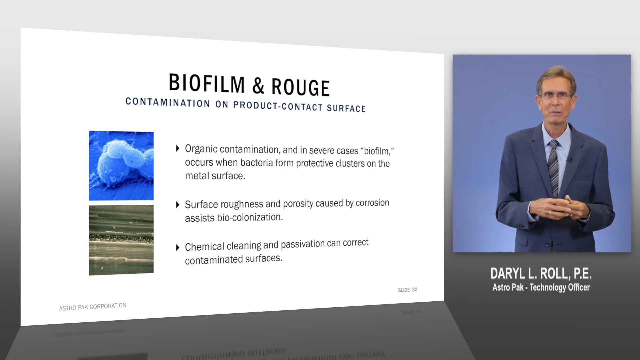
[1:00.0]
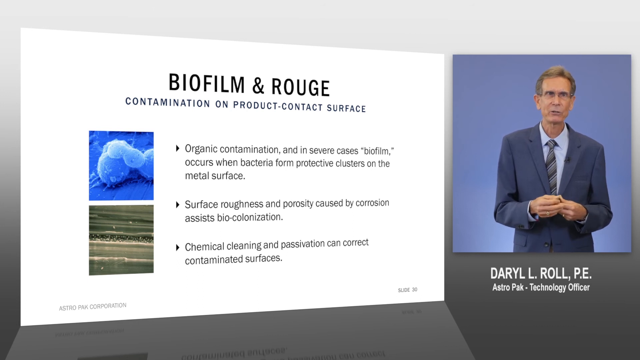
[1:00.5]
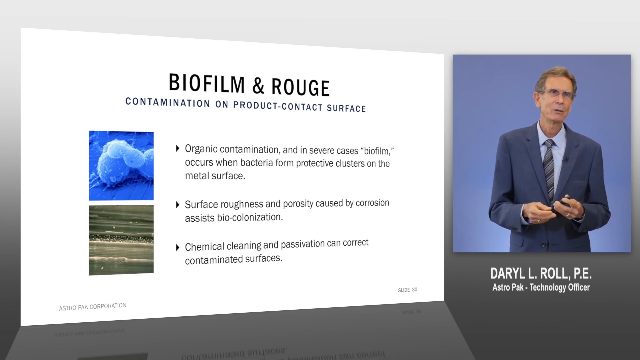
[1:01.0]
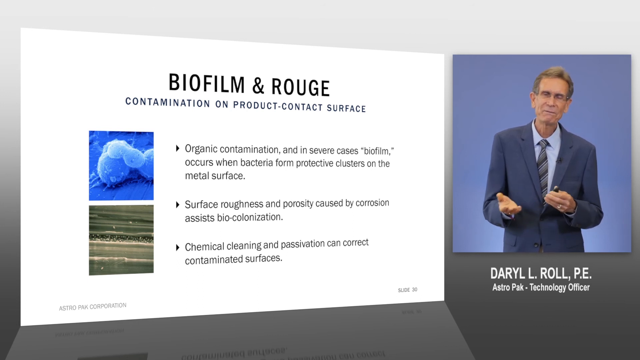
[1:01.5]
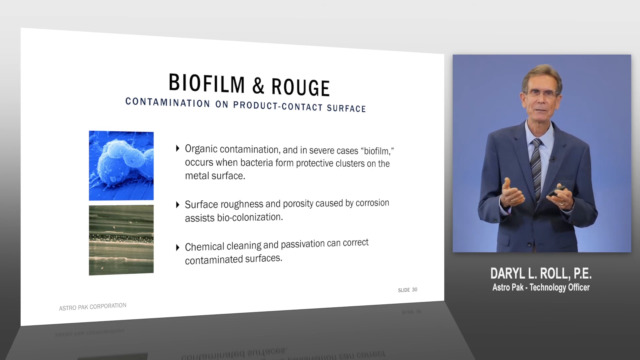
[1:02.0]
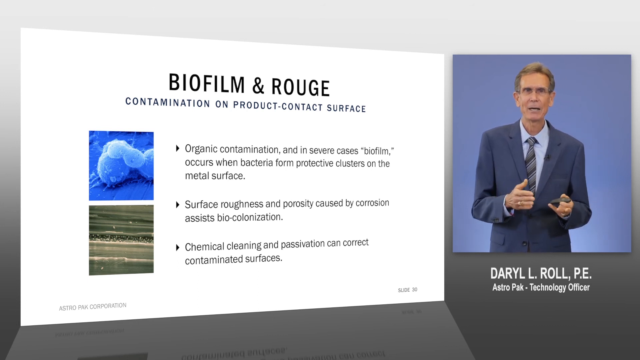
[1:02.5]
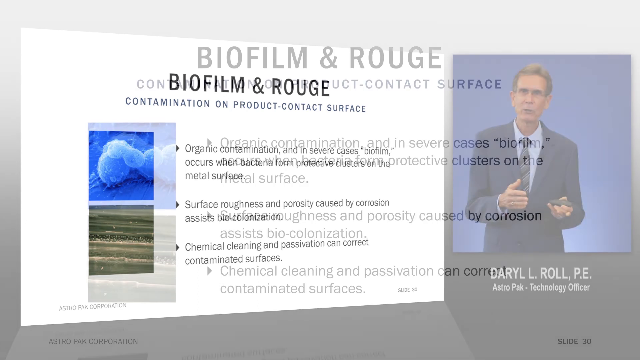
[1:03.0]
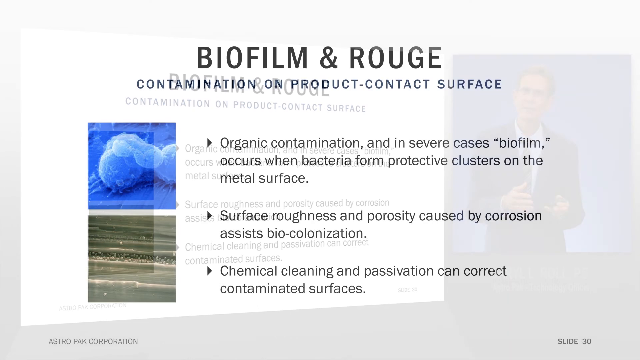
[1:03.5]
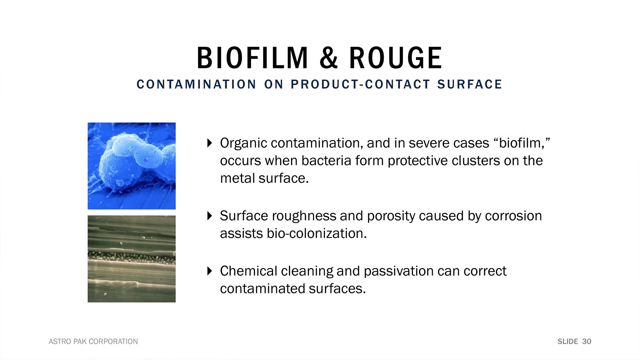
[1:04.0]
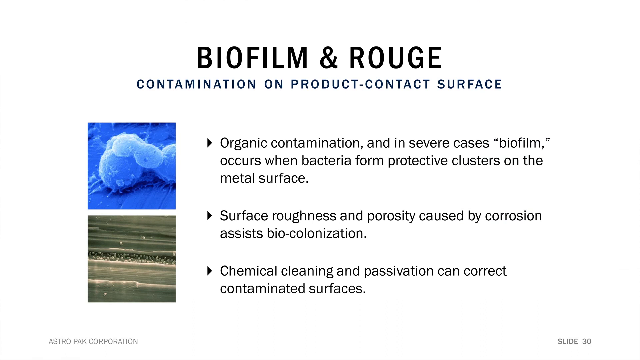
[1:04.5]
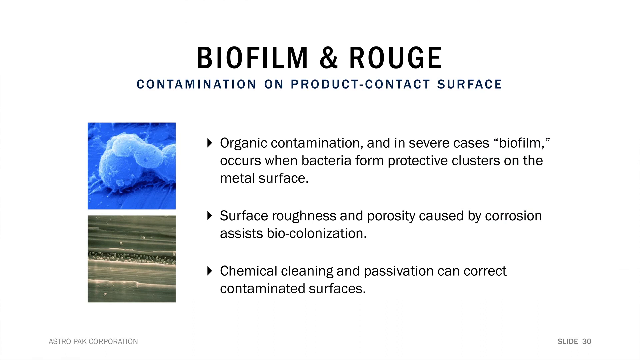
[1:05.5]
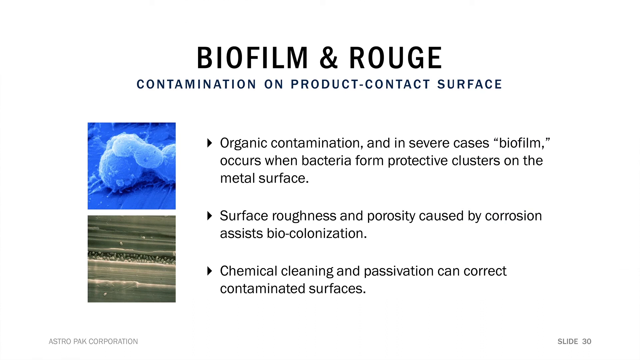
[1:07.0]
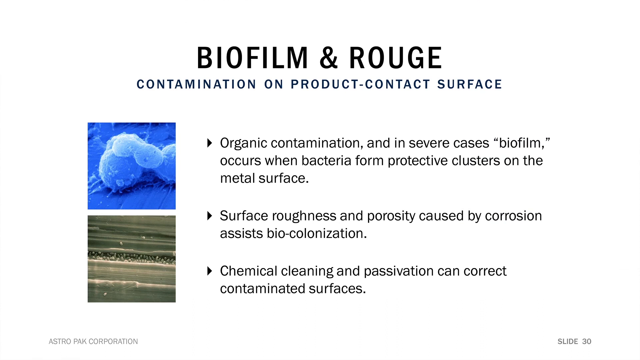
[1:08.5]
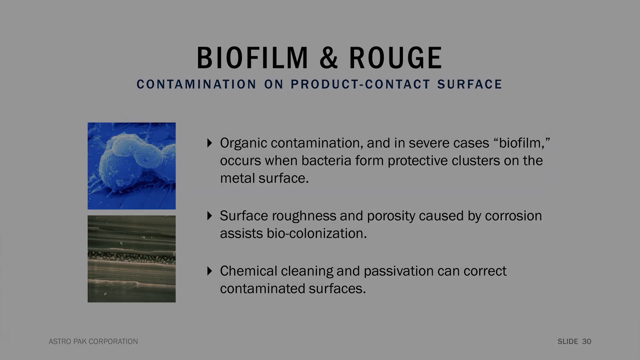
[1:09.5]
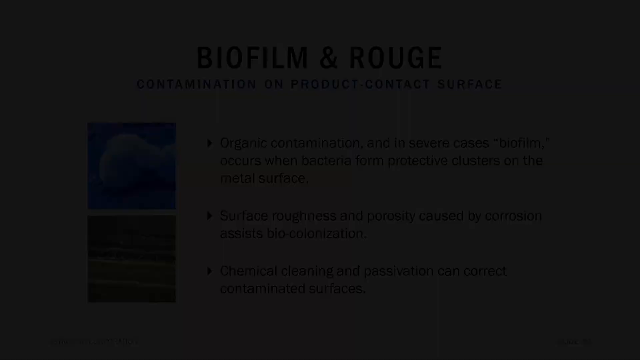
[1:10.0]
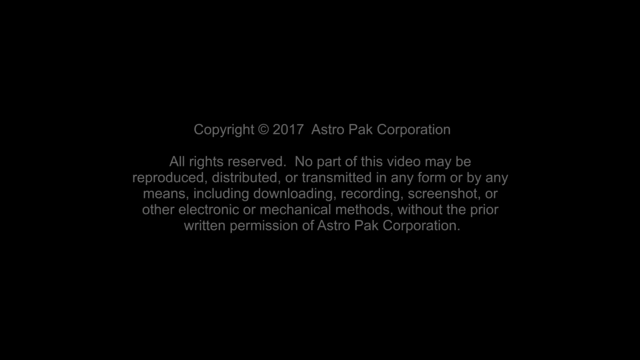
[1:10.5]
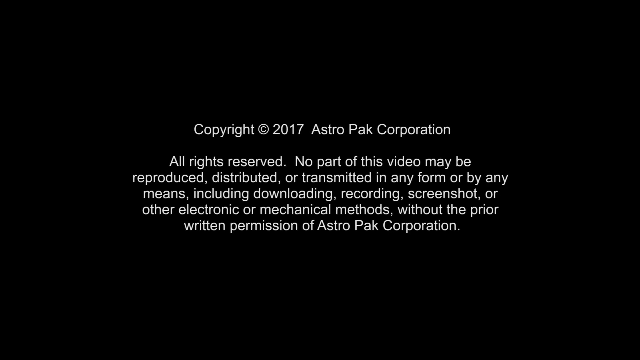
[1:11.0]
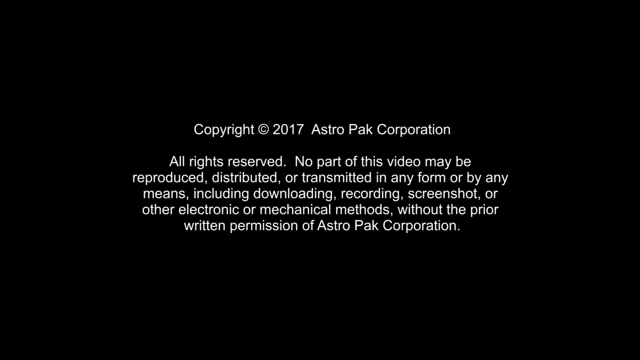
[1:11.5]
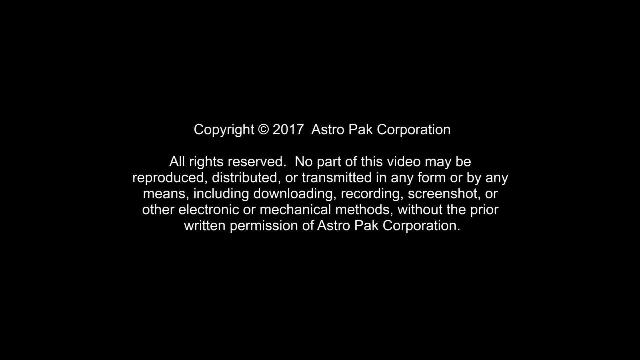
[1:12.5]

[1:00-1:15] The officer, in a formal suit with a powder blue shirt and tie, is discussing something and holds something like a remote in his hand to control the slide. The video of him then disappears, leaving only the notes on biofilm and drug, which mention contamination. There are two images, one blue and the other dark. Other notes cover surface roughness and porosity, and chemical cleaning. Next, a dark background shows a copyright notice from the Astro Pak corporation dated 2017, with "all rights reserved" and a statement that "no part of this video may be reproduced".